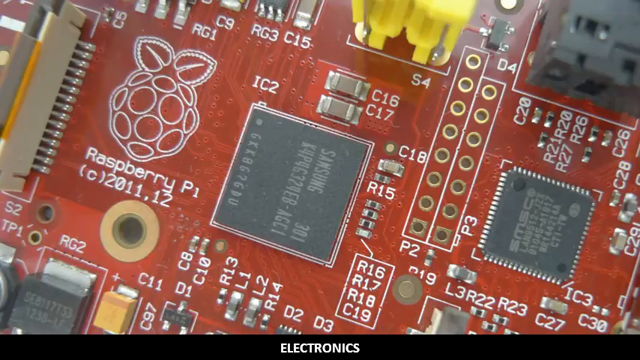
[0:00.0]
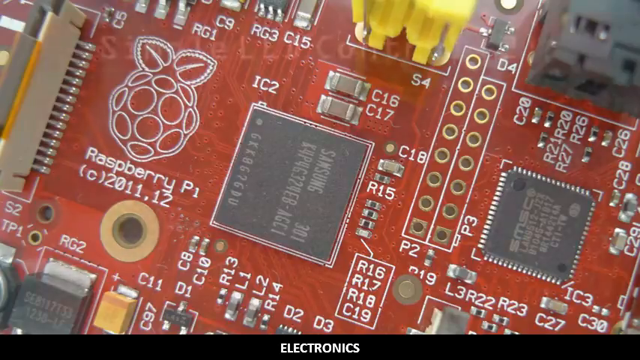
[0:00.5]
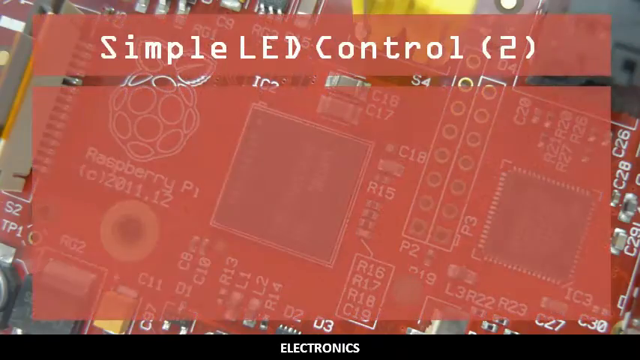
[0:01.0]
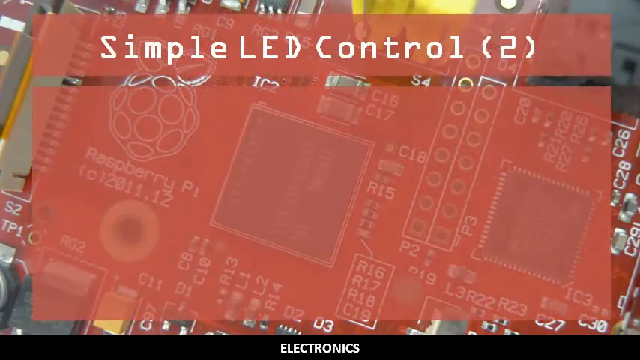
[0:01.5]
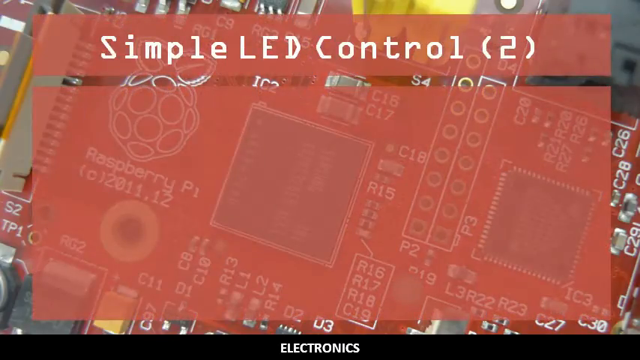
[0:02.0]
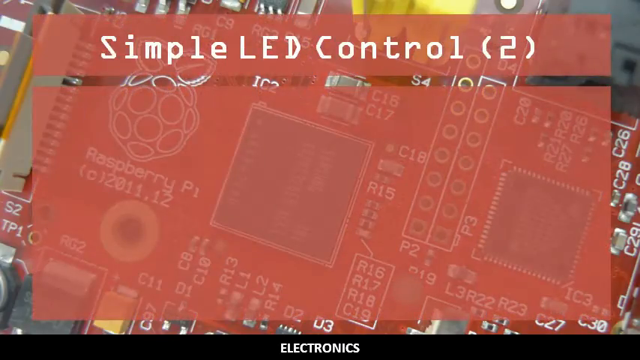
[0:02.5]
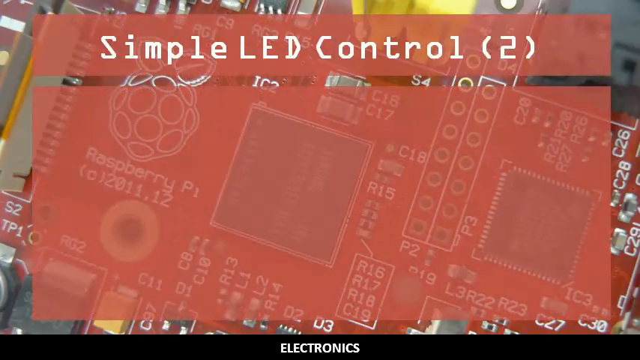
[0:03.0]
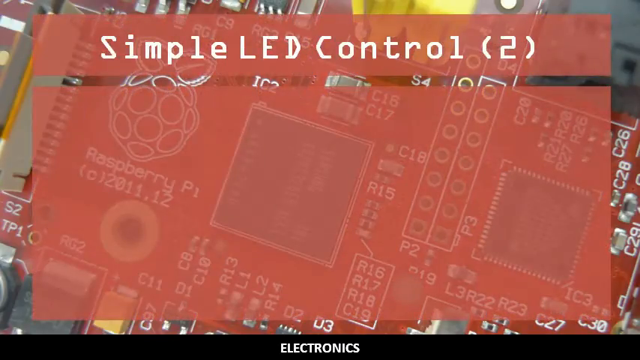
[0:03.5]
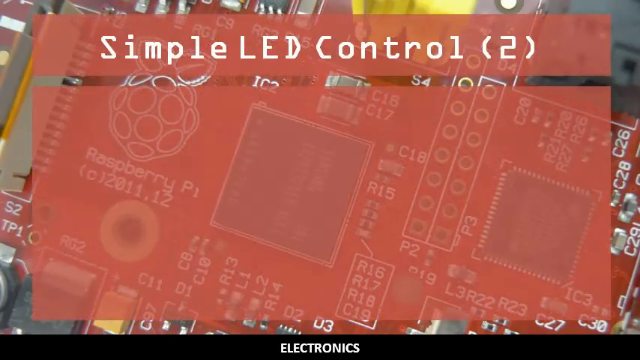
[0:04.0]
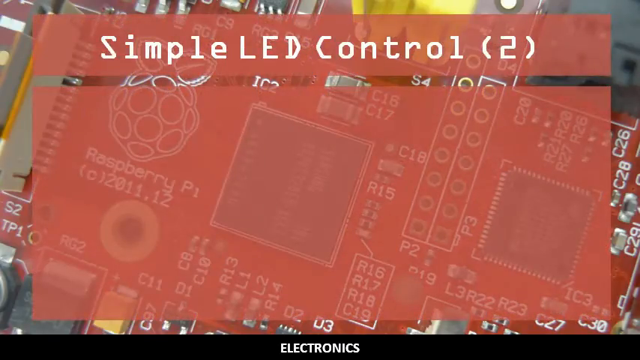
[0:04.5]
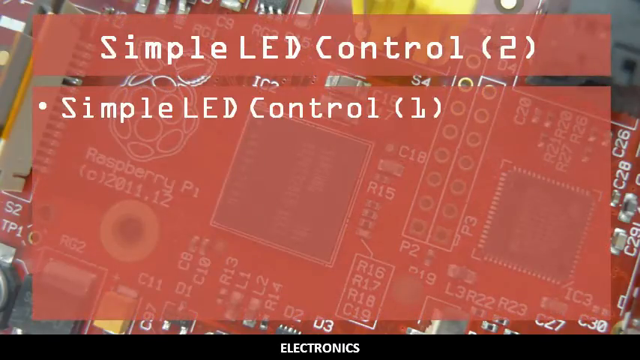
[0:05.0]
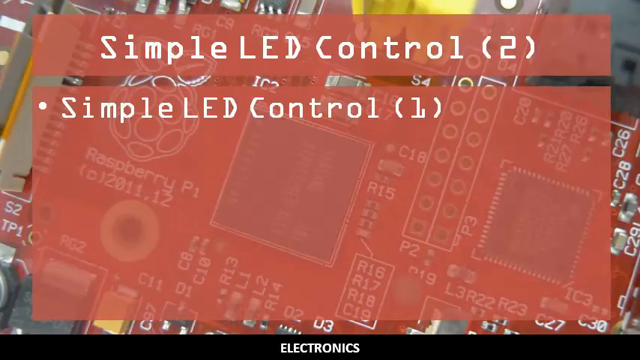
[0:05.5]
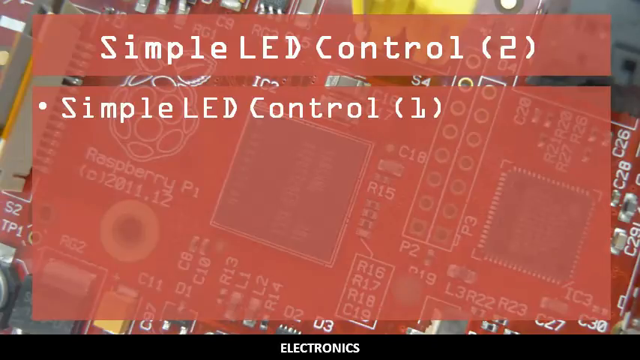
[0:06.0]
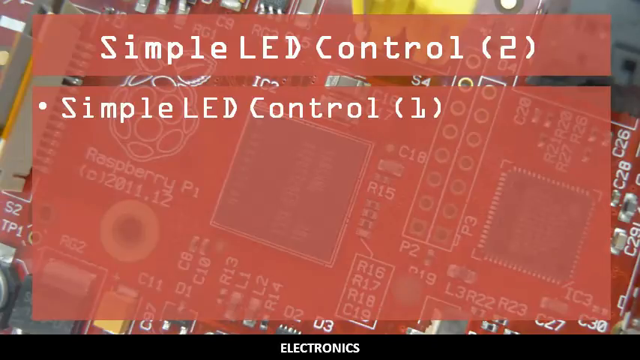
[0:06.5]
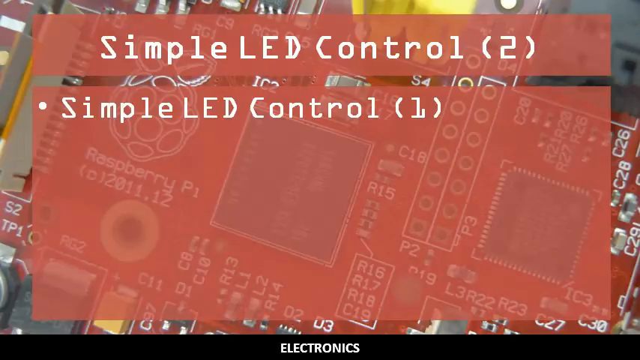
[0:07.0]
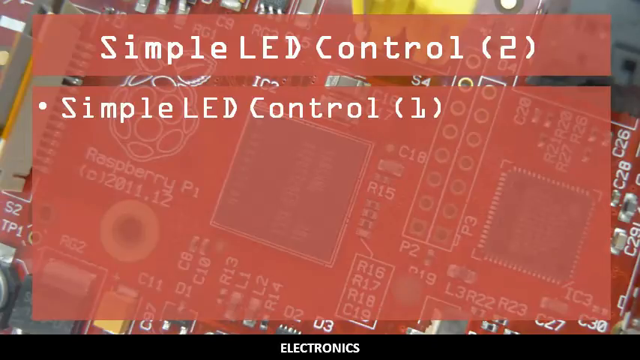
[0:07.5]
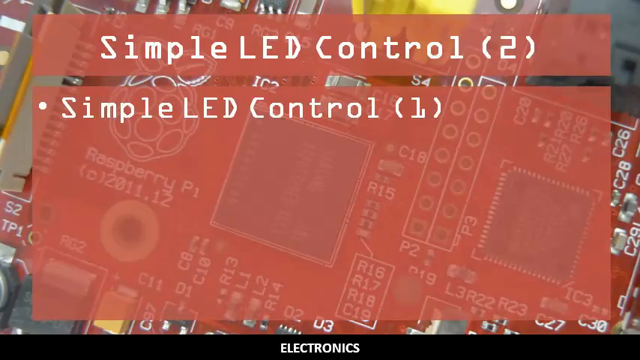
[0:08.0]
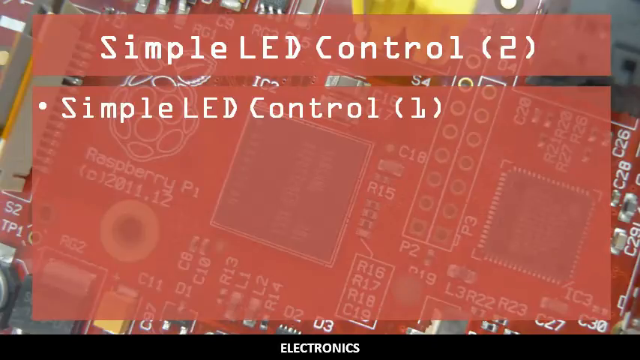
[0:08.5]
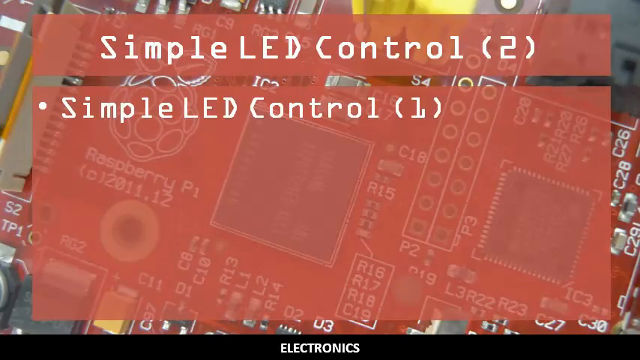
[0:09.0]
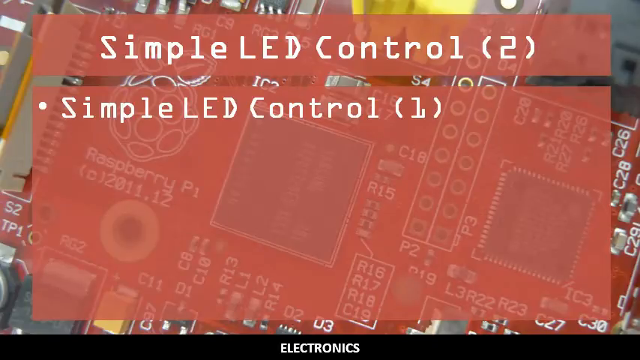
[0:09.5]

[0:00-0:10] The video opens on an image of a Raspberry Pi motherboard or some other type of electronics board. The Raspberry Pi logo is visible along with text reading "Raspberry Pi 2011.12". Most of the board is red and covered in a variety of chips and little silver pieces. Red, opaque boxes come up, a smaller one at the top and one at the bottom. The heading in the top box says "Simple LED Control (2)". In the bottom box, a bulleted list starts to appear; its first item reads "simple LED control (1)".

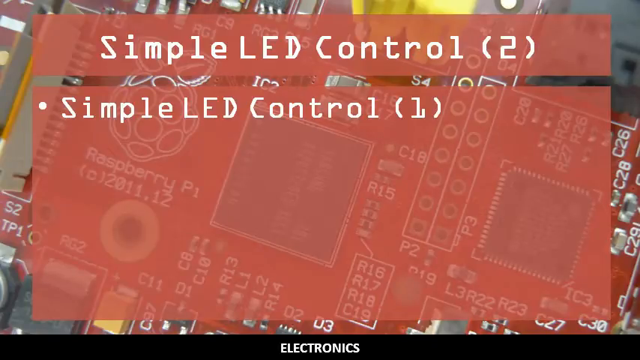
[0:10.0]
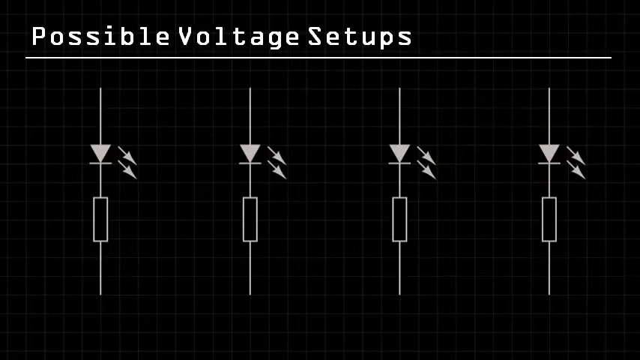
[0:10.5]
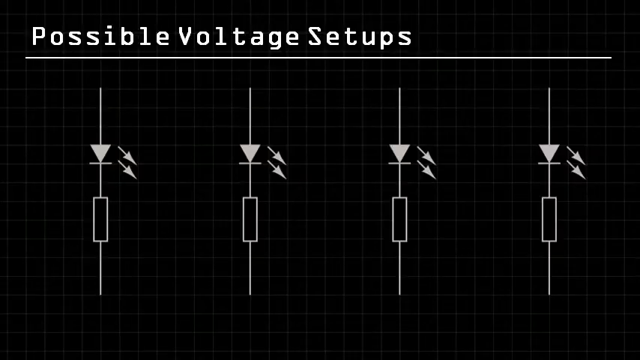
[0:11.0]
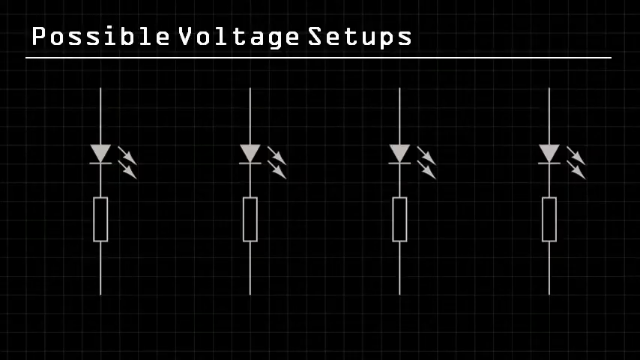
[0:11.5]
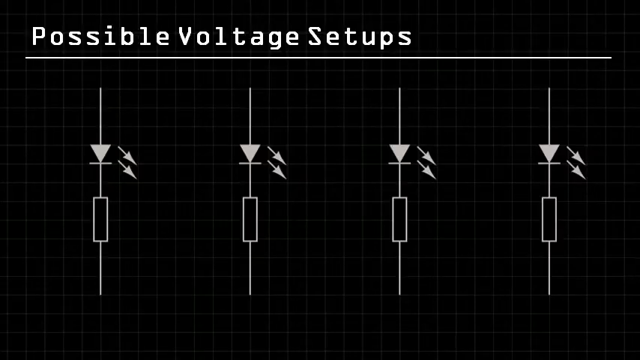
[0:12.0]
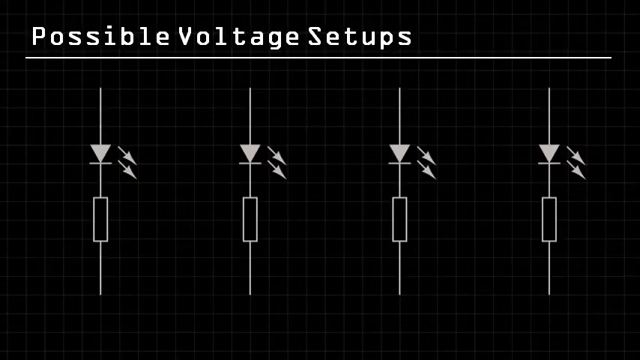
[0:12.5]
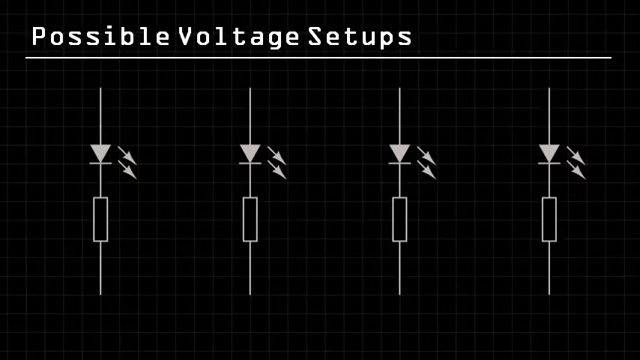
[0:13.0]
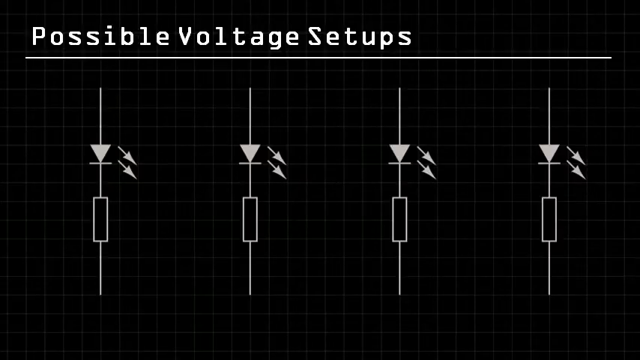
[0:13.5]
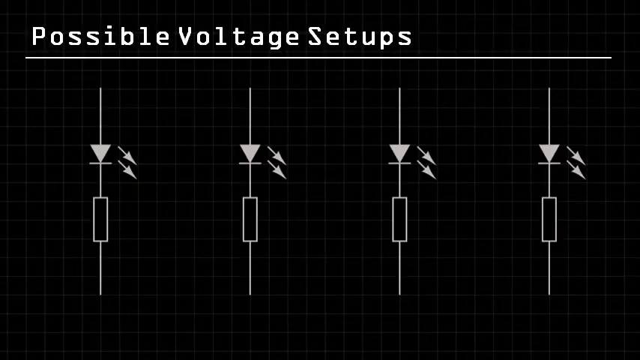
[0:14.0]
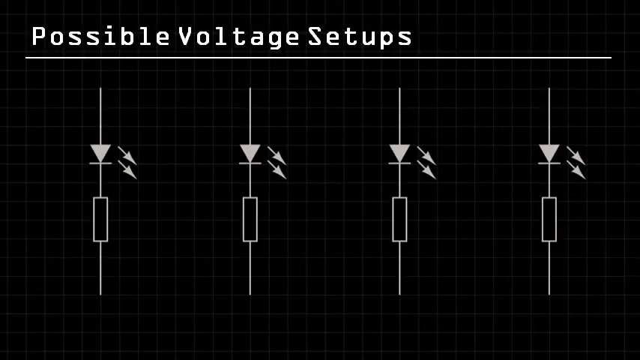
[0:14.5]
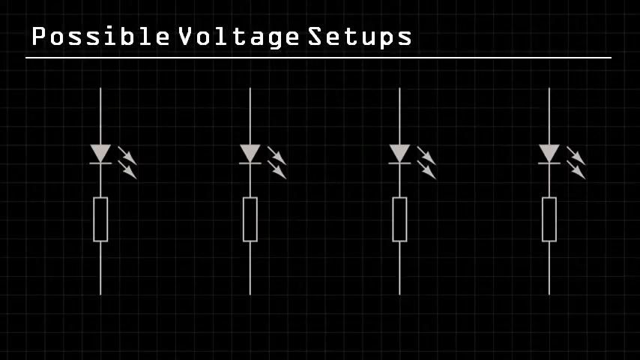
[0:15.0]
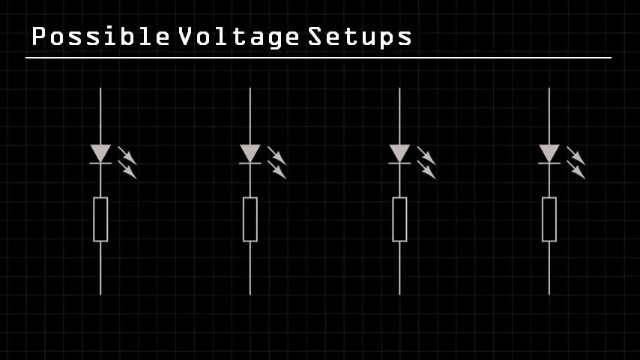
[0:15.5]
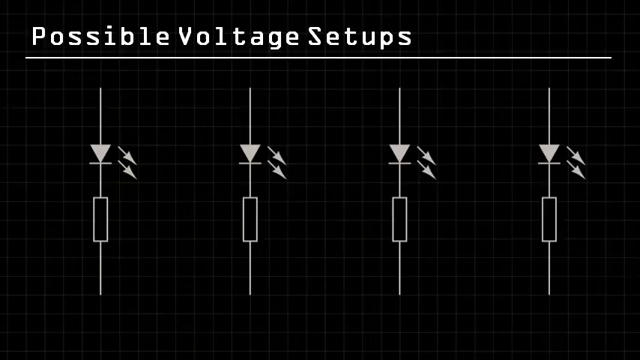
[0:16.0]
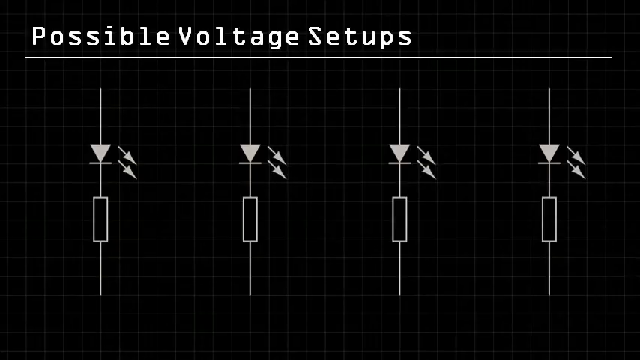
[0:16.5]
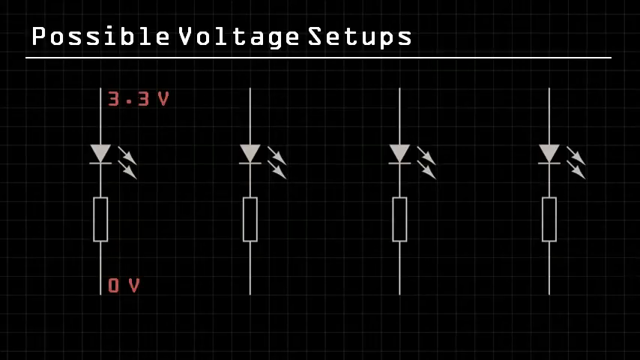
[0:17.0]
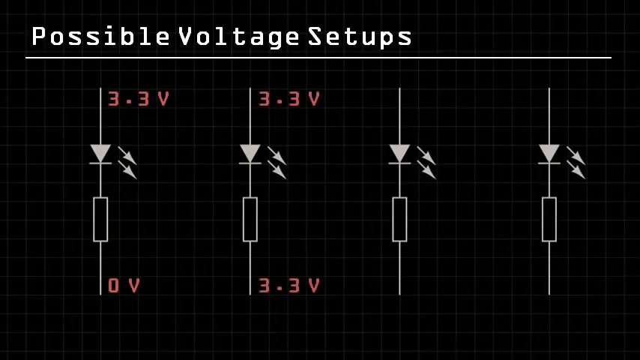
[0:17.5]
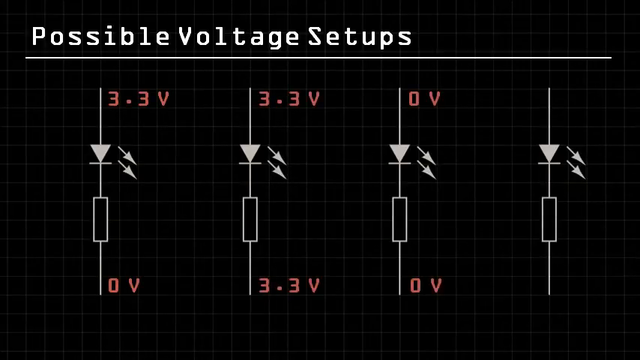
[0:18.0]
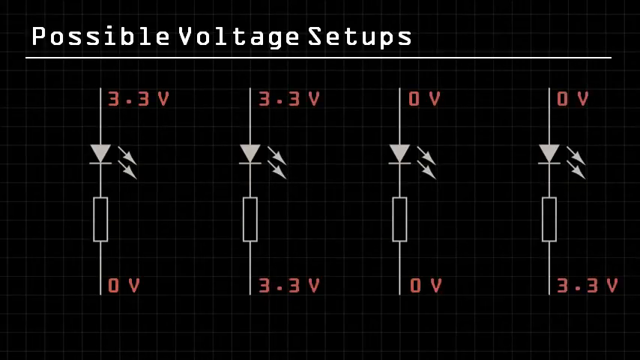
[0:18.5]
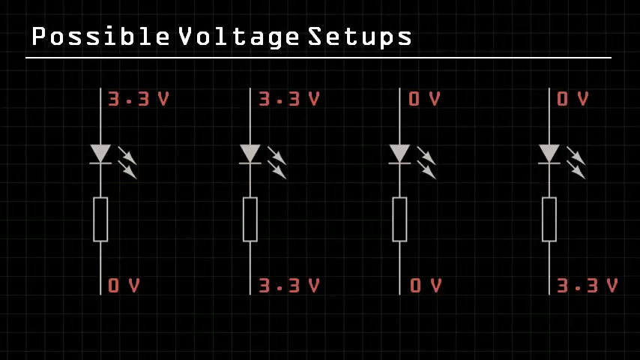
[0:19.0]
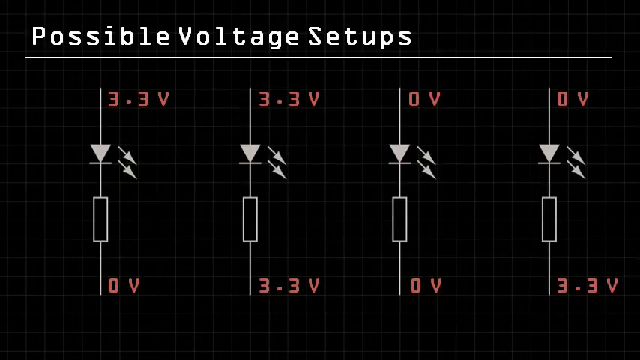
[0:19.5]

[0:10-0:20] The video flashes to a black screen with "possible voltage setups" at the top, followed by a diagram. The diagram consists of four lines that look like some sort of voltage schematic, all identical. Each is a line with a triangle toward the top, another line touching the triangle horizontally, and the vertical line continuing down into a rectangle, with the vertical line reappearing on the other side of the rectangle and continuing down. All four examples have exactly the same shape and design.